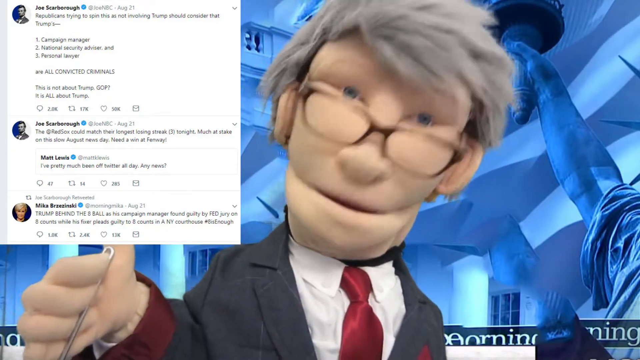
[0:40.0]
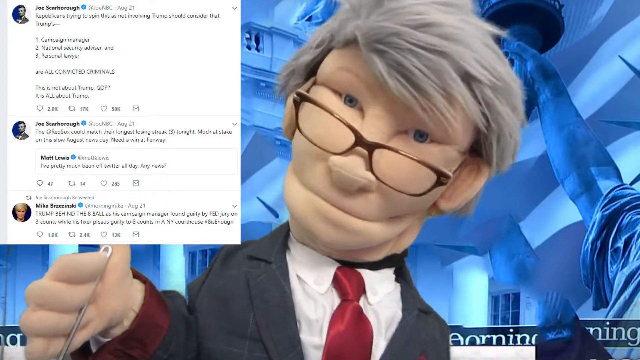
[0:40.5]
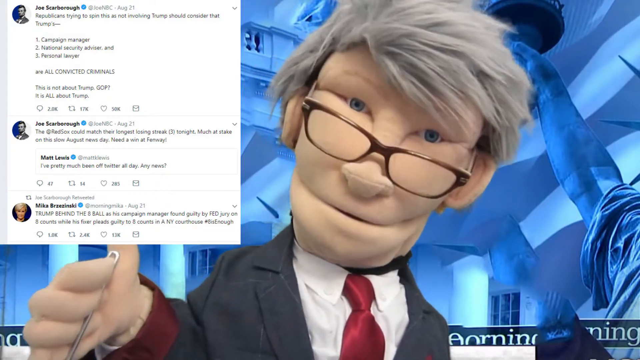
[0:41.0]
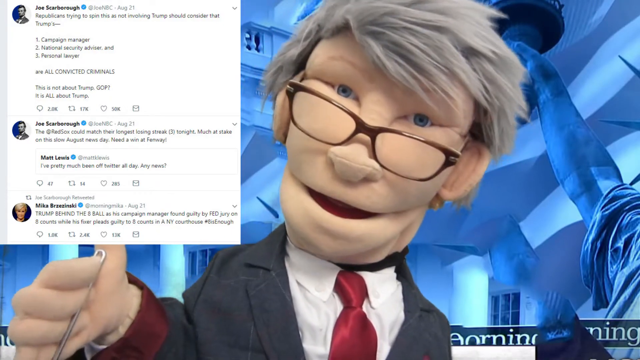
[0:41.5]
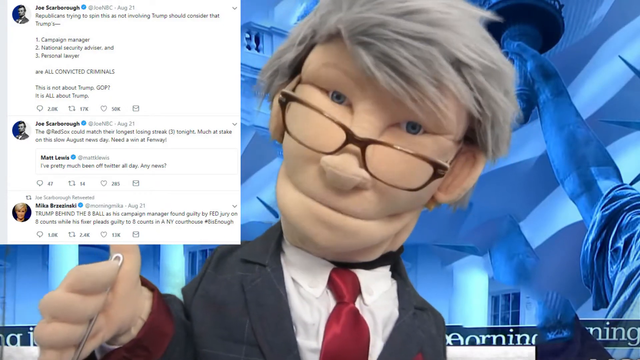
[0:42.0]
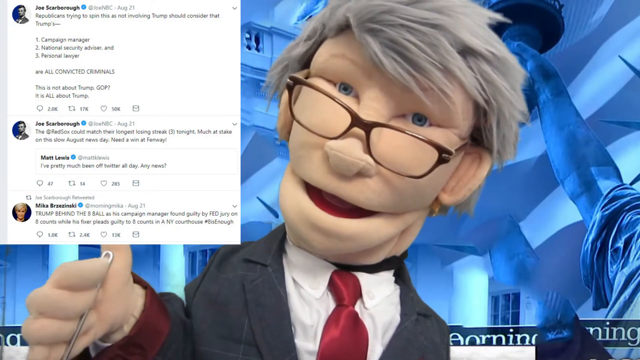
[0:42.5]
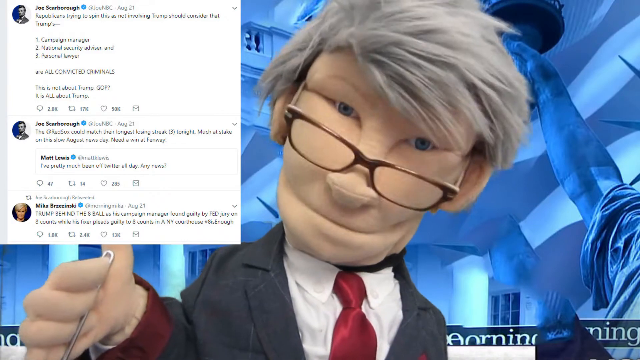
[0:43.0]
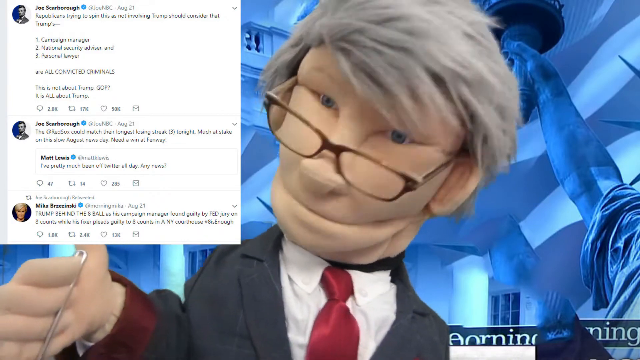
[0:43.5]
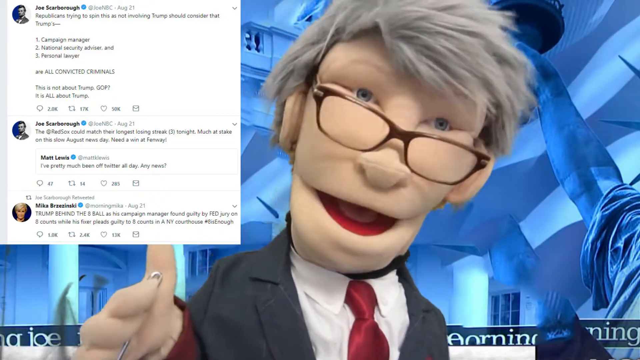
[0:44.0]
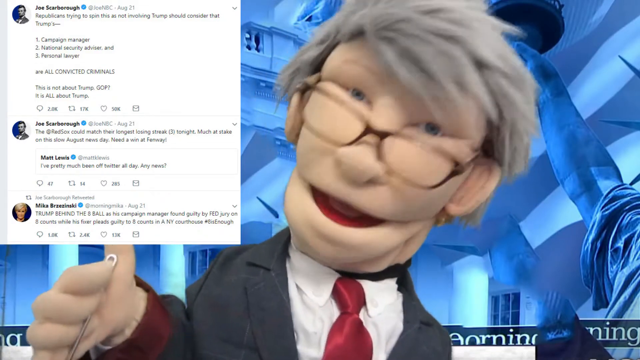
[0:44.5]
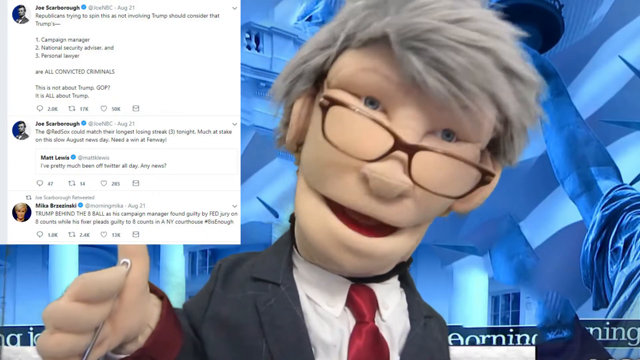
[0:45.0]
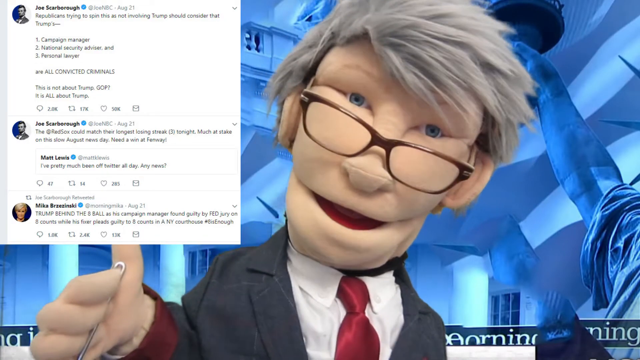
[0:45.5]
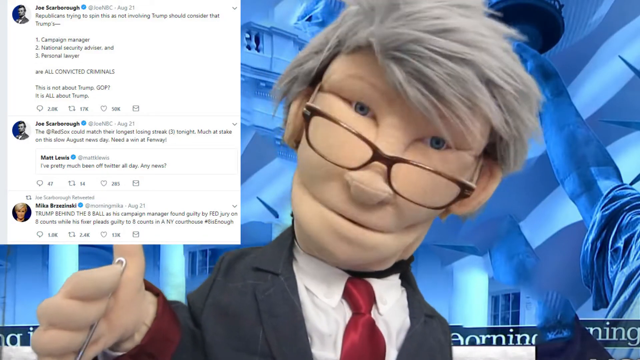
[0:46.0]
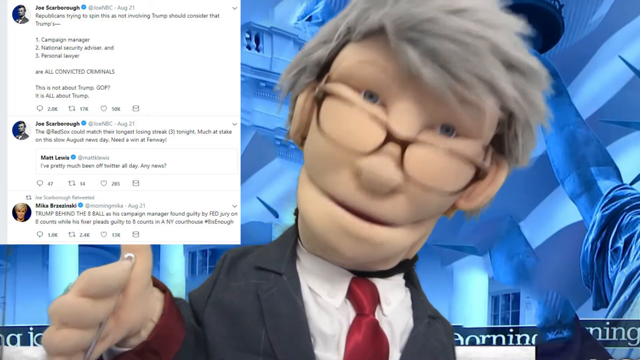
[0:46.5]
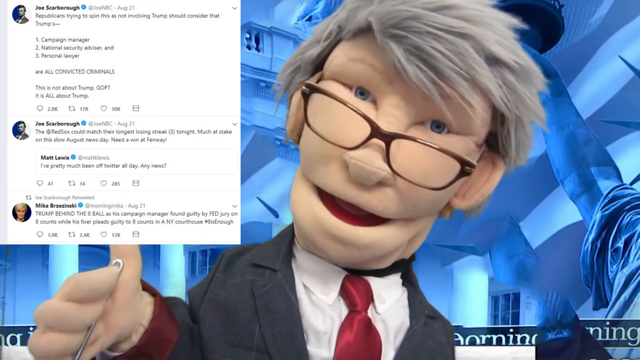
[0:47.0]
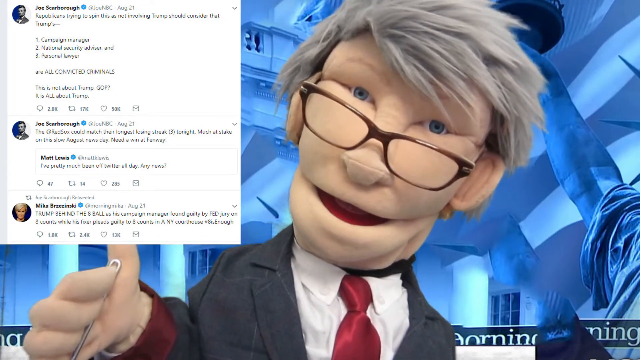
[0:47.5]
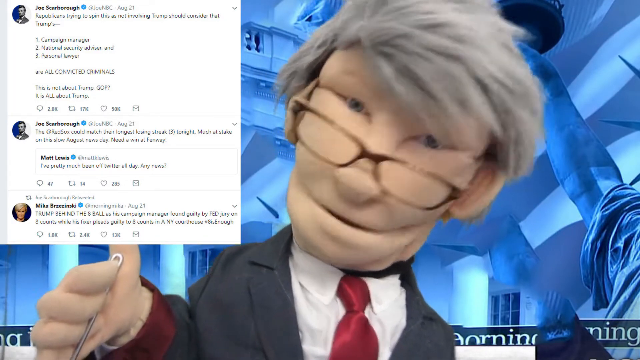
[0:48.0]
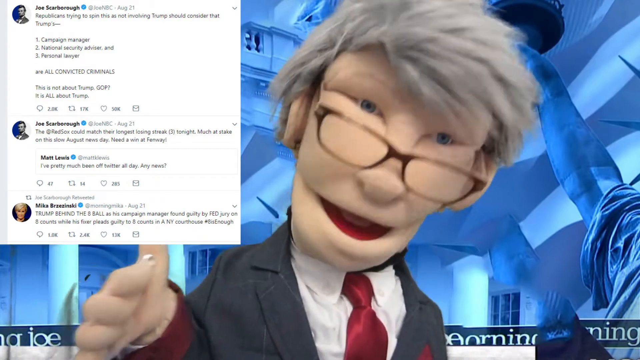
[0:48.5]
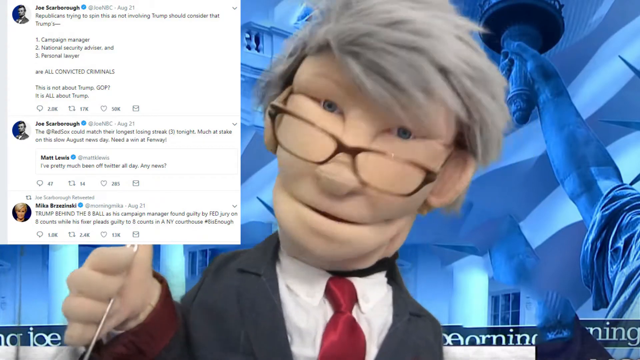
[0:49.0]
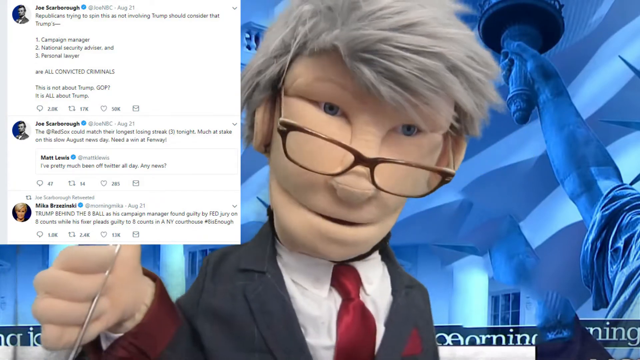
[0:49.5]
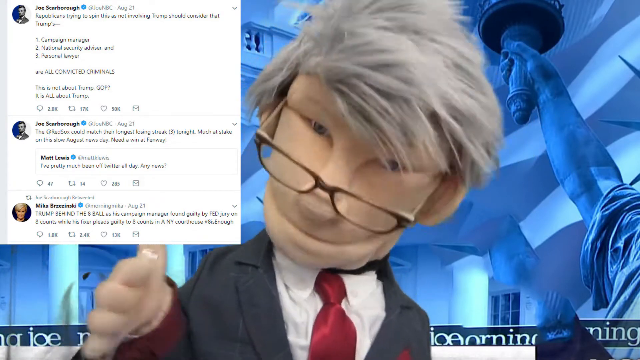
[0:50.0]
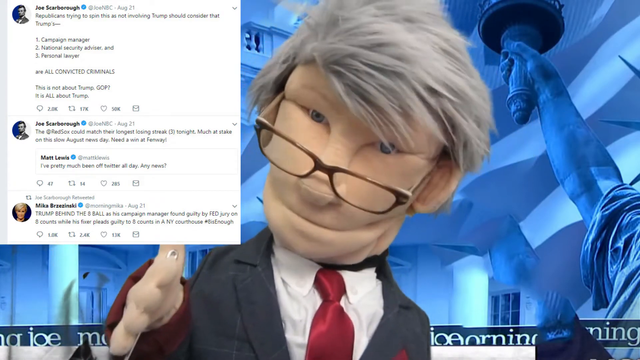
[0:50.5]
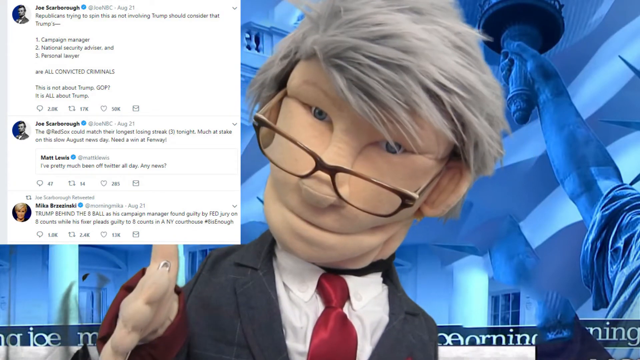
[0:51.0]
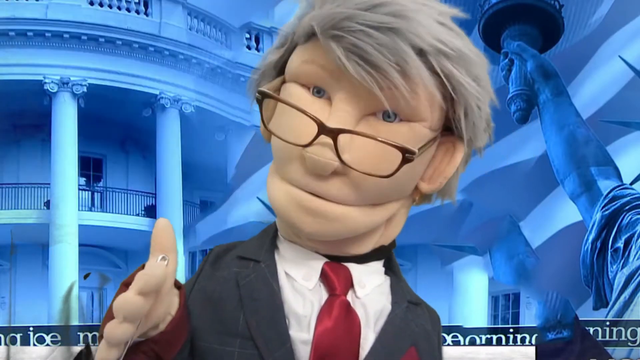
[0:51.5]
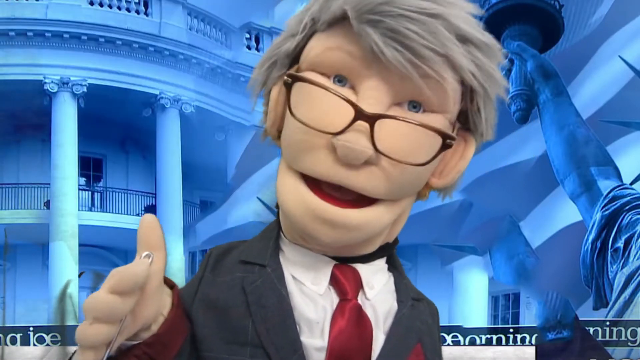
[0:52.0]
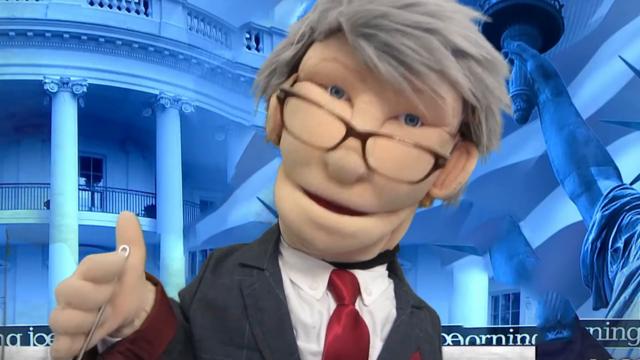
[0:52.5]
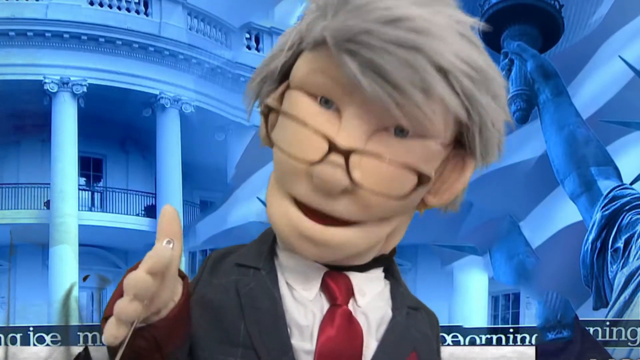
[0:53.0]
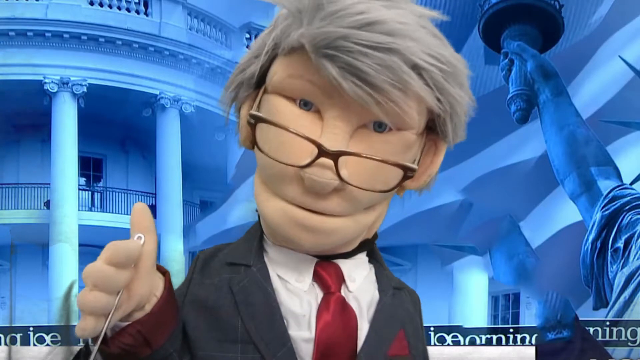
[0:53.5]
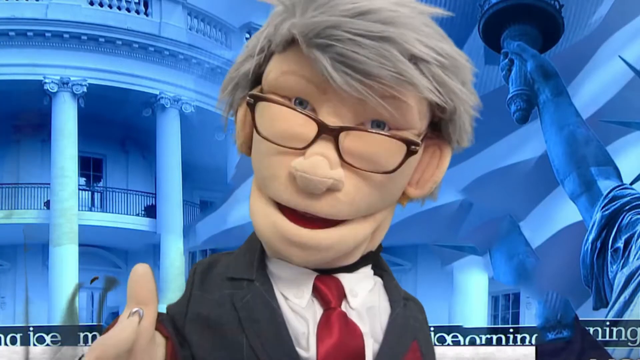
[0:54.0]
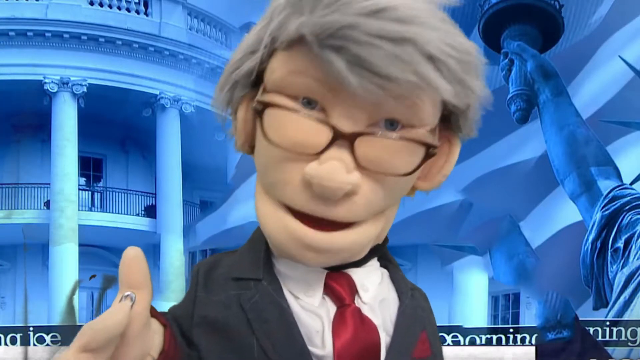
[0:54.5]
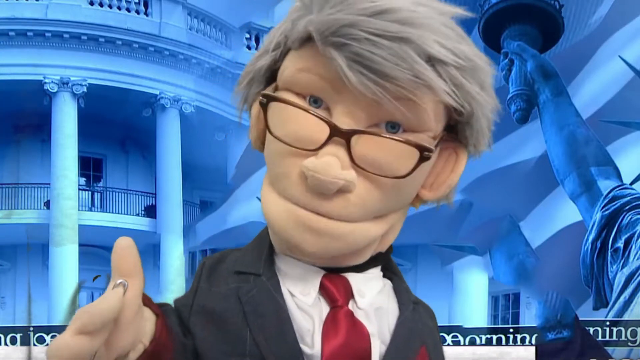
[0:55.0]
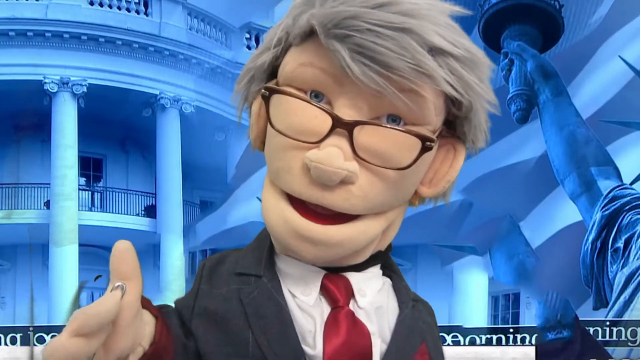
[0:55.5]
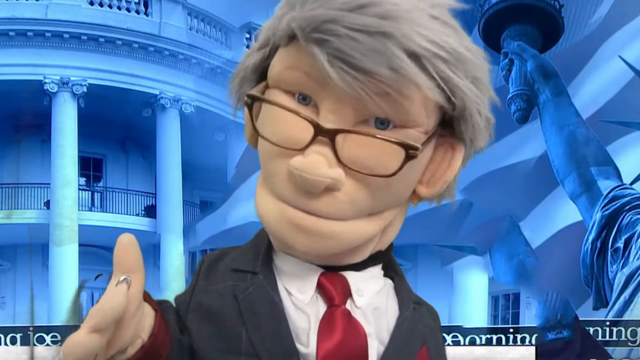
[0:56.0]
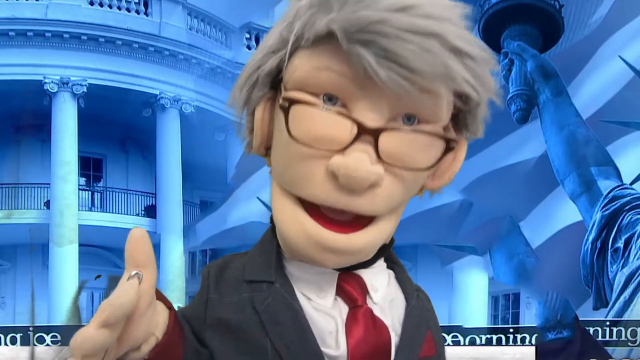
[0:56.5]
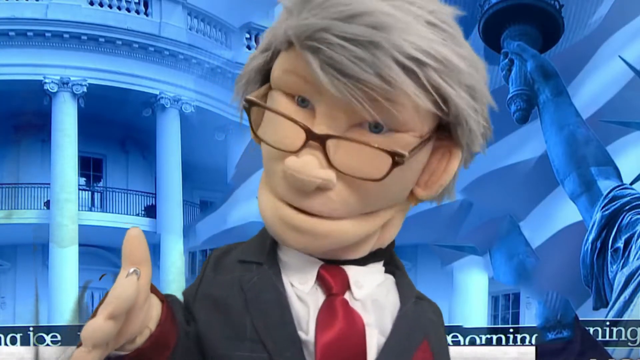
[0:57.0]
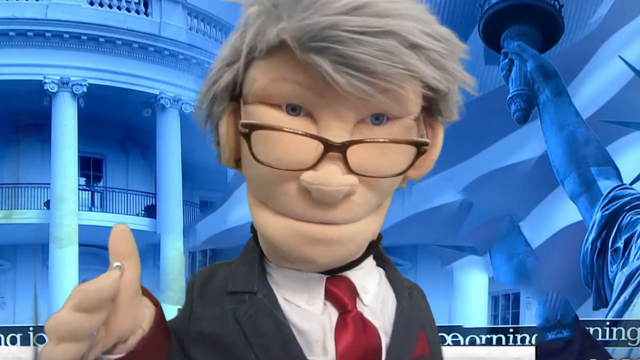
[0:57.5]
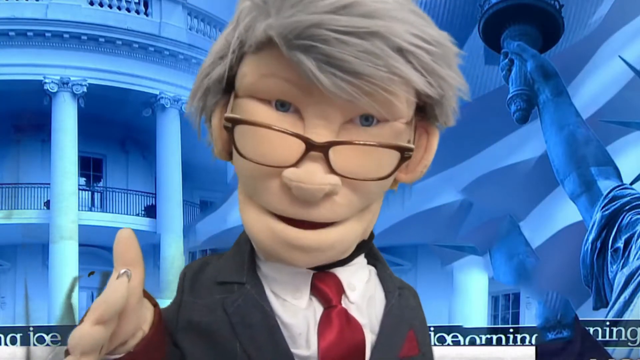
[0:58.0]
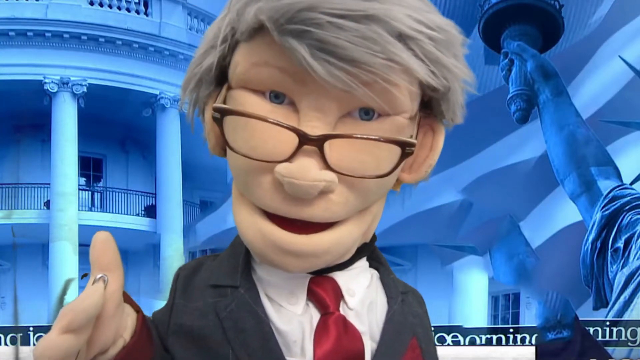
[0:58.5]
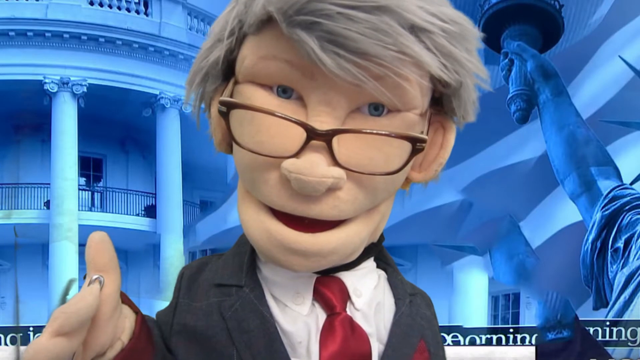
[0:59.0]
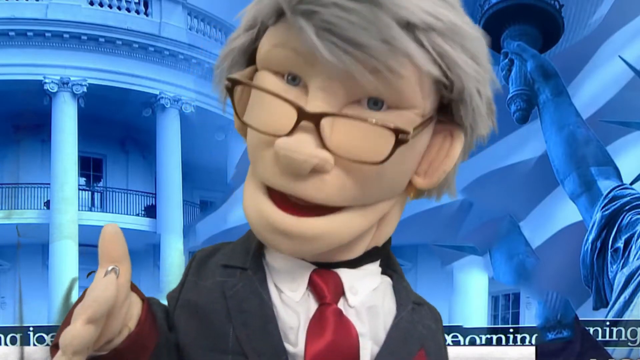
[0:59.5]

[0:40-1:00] The Muppet speaks directly to the audience in a very serious tone. The background has a light blue texture, an American flag, pillars of the White House, and a sign on the left-hand side of the screen. Someone controls the movements of his mouth as he opens it. On the left-hand side of the screen there is a comment section.